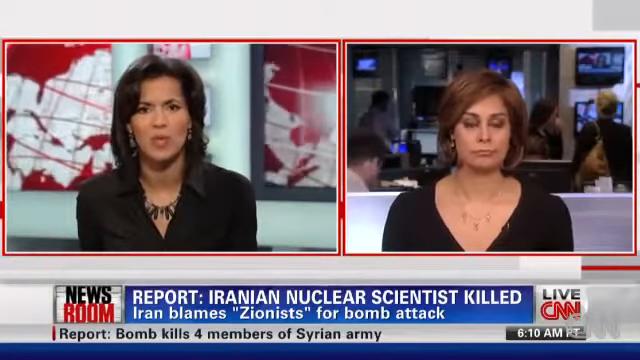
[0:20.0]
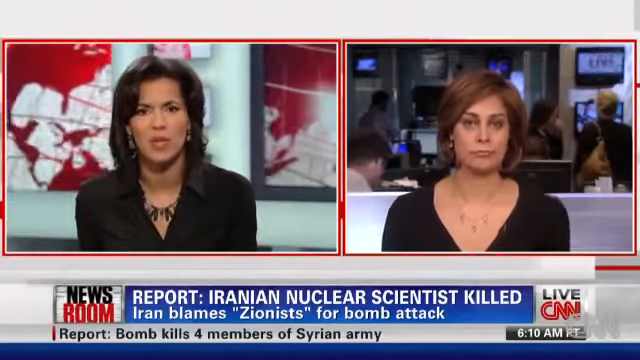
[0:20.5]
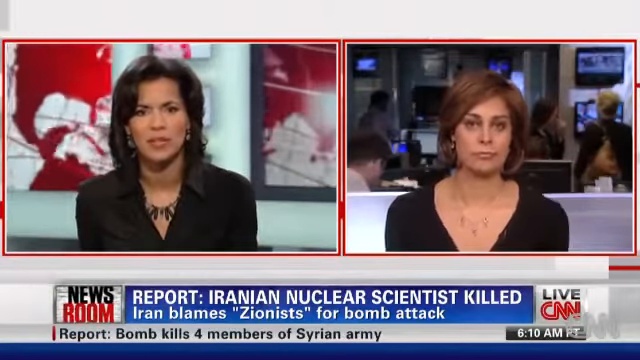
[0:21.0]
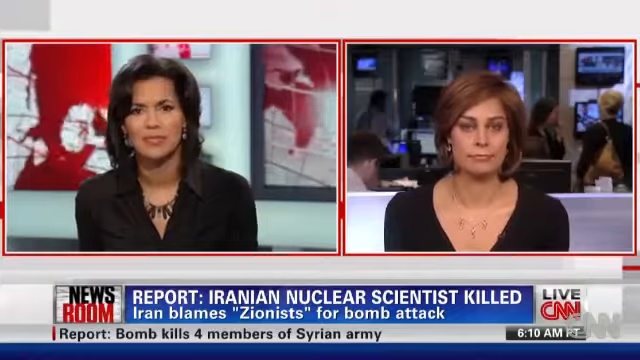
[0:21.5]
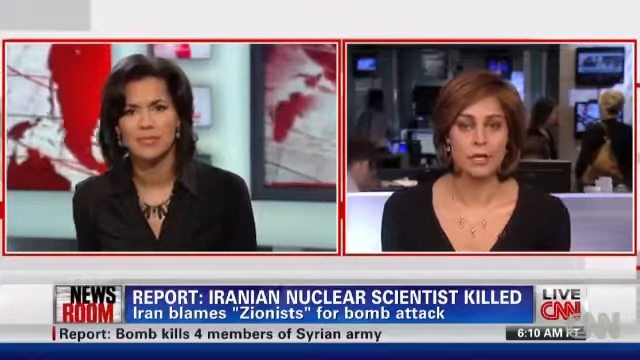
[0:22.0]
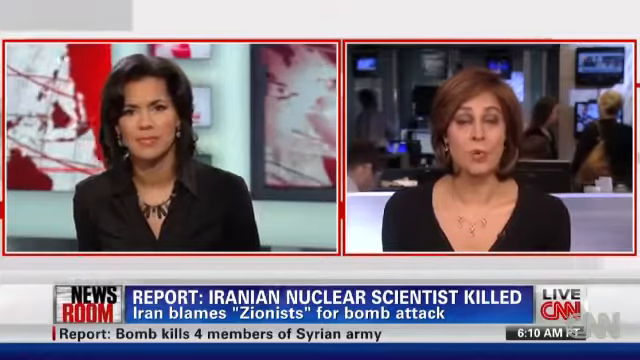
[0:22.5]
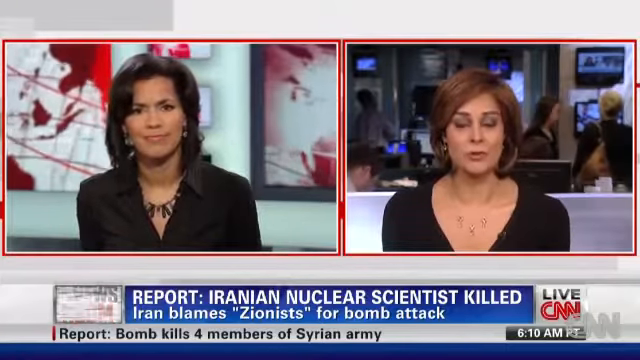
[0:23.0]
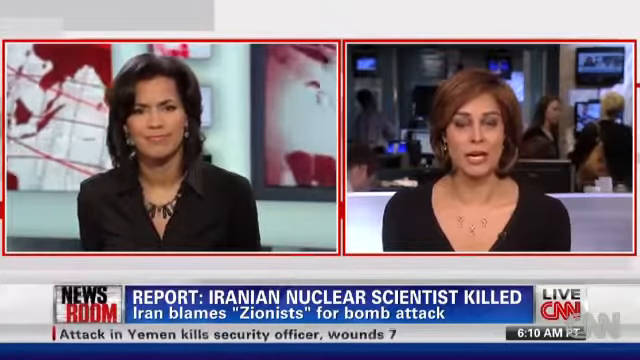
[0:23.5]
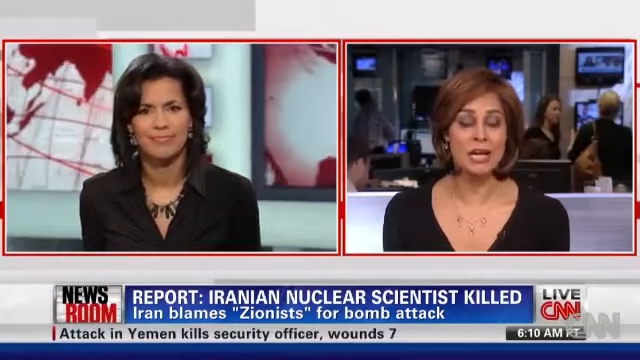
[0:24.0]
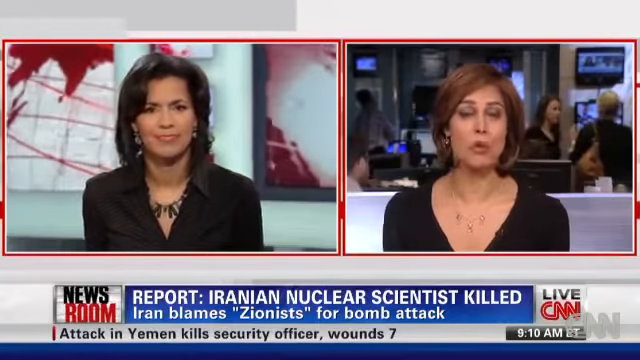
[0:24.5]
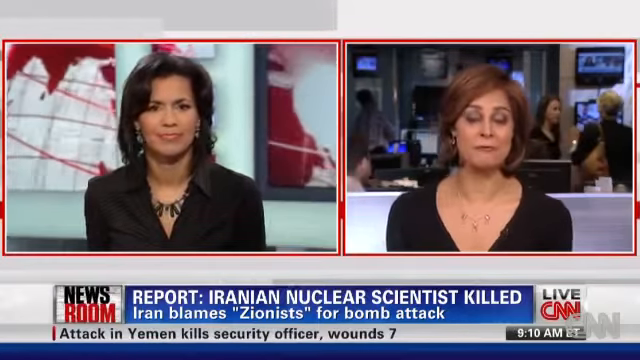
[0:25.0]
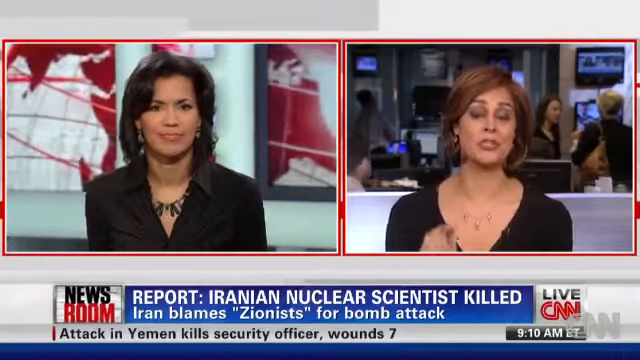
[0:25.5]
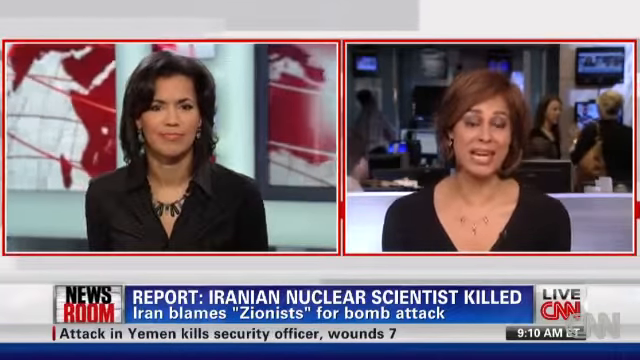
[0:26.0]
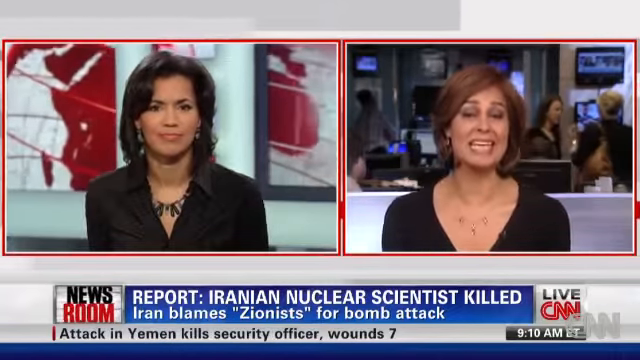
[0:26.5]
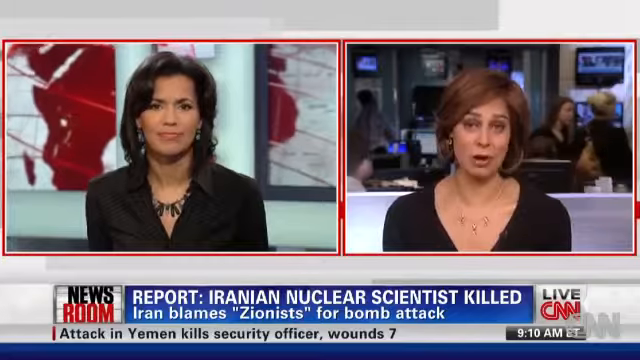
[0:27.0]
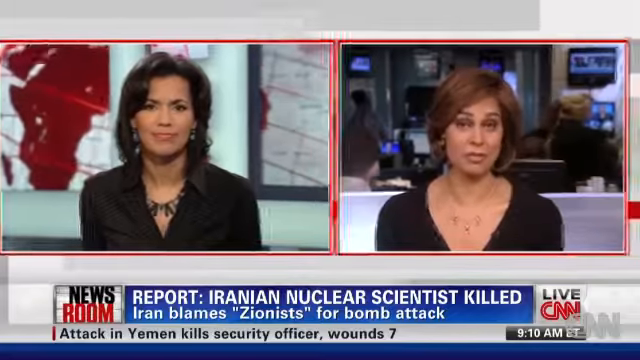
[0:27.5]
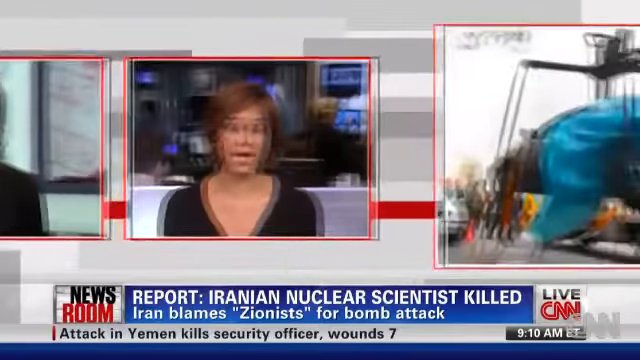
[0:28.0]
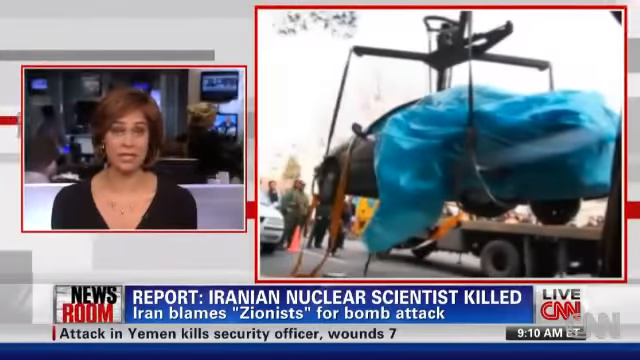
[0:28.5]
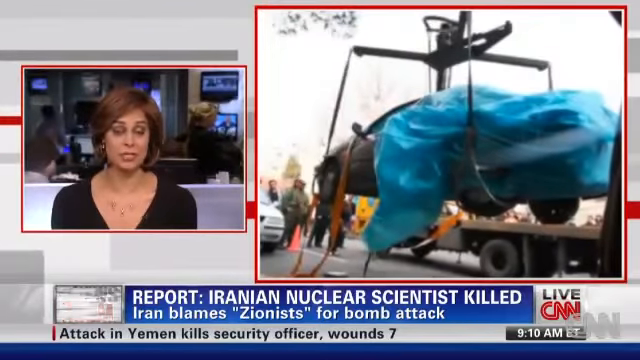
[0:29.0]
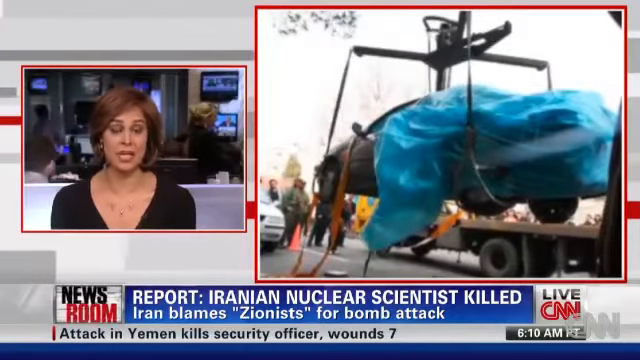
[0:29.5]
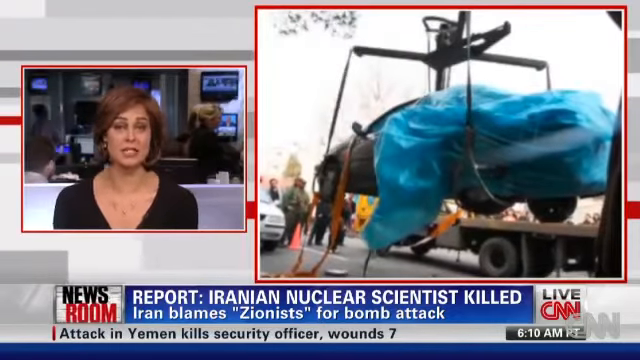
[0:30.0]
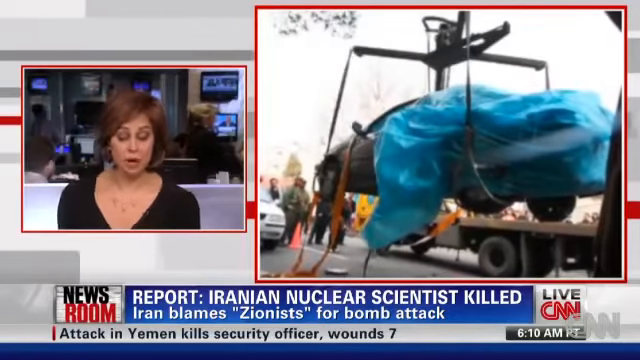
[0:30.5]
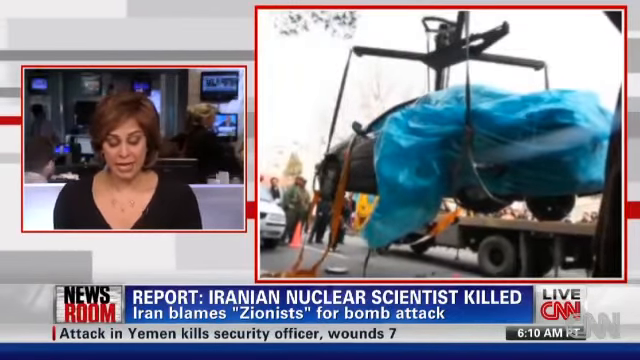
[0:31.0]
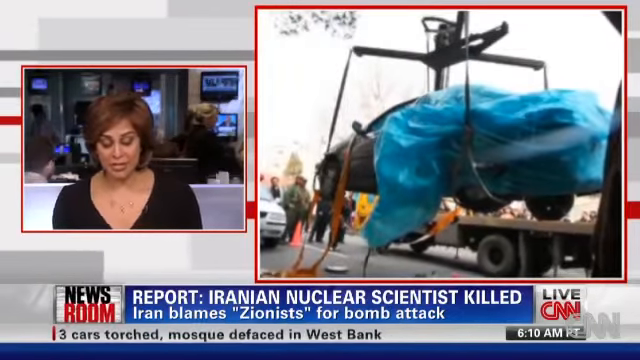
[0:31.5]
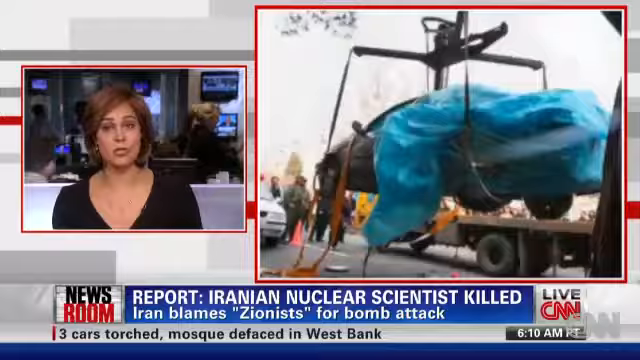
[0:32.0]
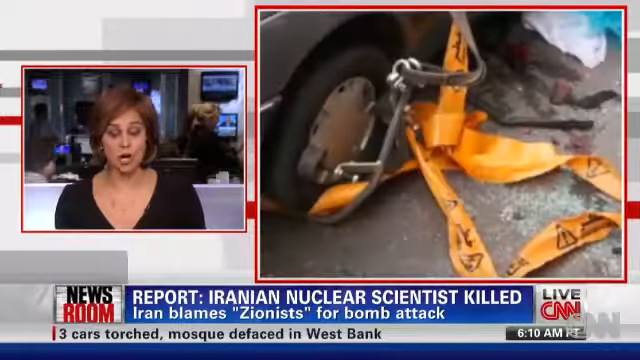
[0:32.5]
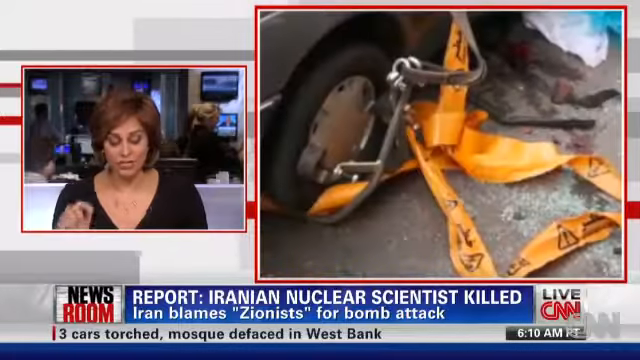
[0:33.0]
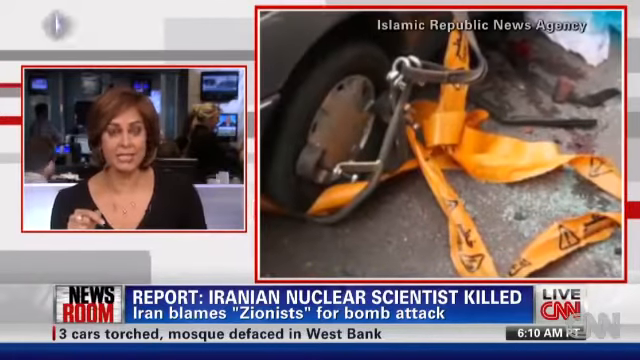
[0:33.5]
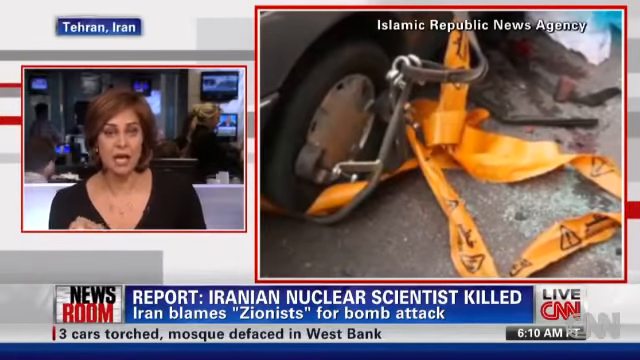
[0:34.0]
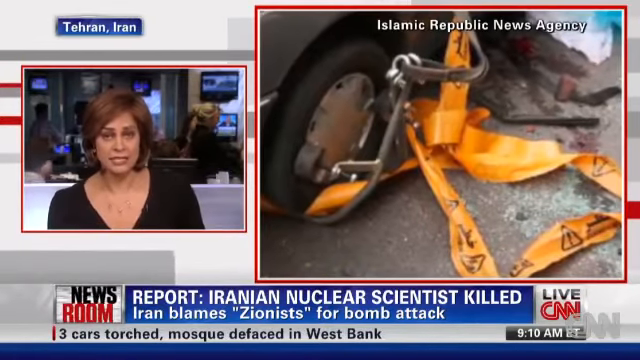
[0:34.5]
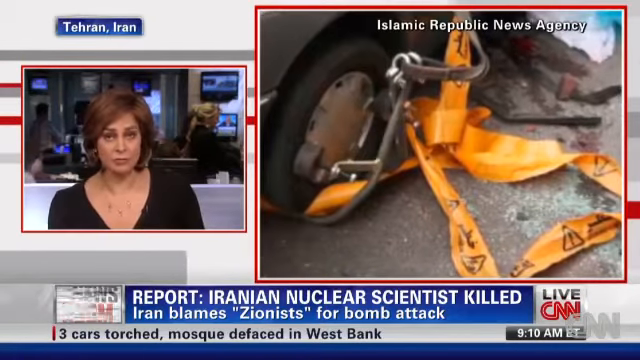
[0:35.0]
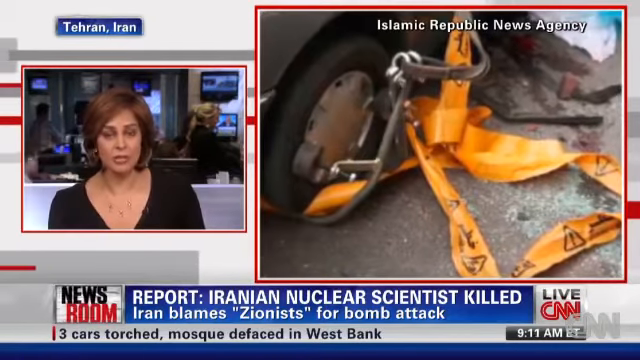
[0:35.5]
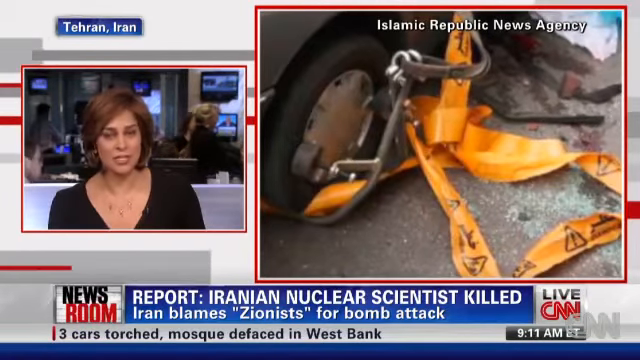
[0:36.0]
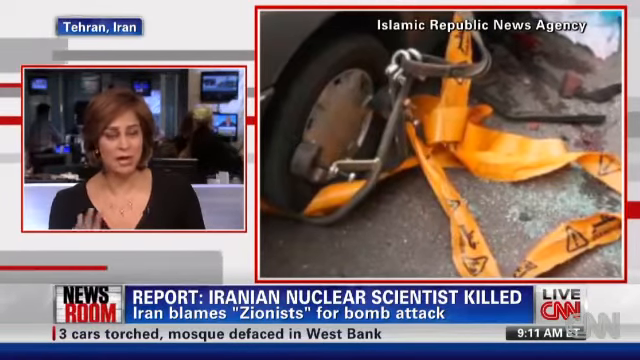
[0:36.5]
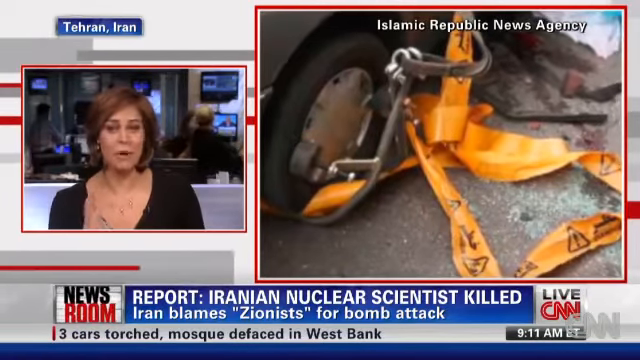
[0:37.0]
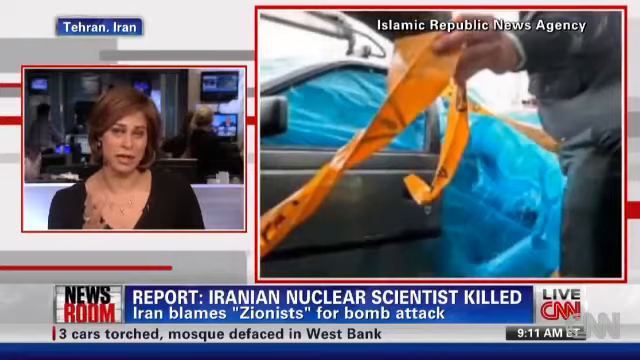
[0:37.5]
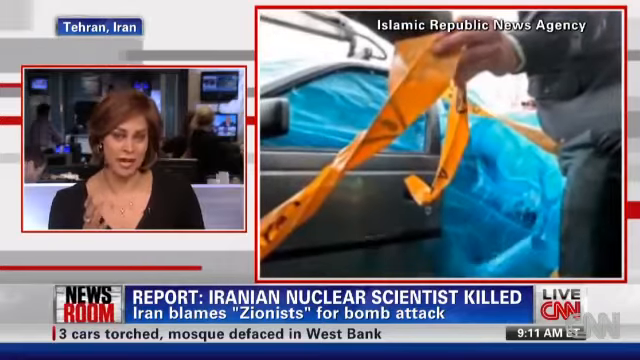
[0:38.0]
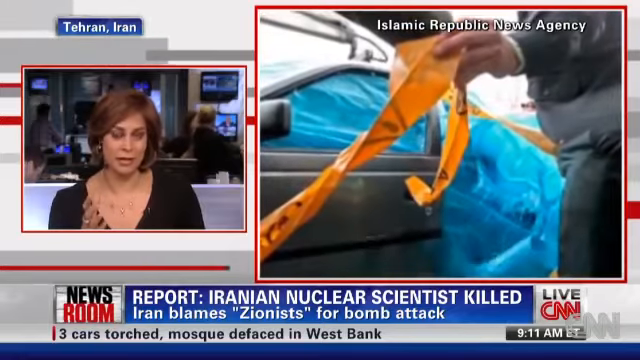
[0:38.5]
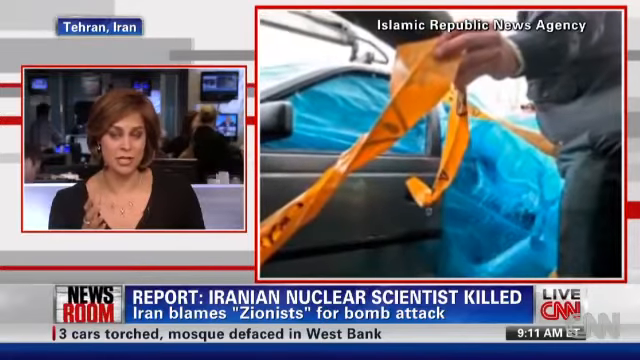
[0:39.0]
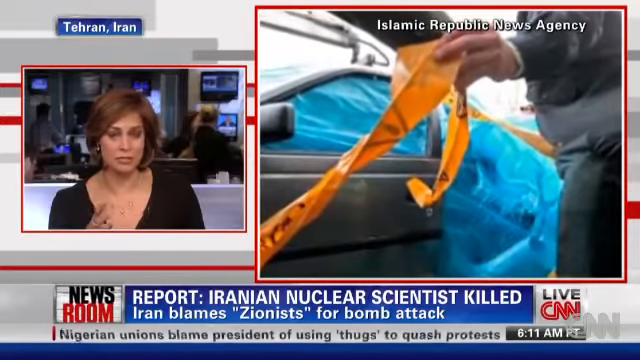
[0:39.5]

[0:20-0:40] Another female journalist is featured. She has brown hair and wears earrings, a beautiful necklace and a black top that seems to be knitwear. While she reports on the killing of the Iranian nuclear scientist, footage shows a car and people in a scene whose action is unclear; a car seems to be carried, possibly out of water, and there seems to be a blood stain on the road. The heading continues with "Iran blames Zionist for bomb attack". Another part of the video shows the text "Islamic Republic News Agency".